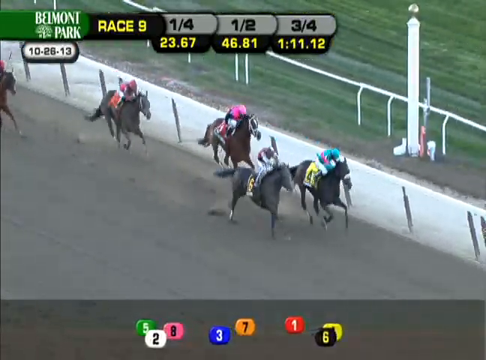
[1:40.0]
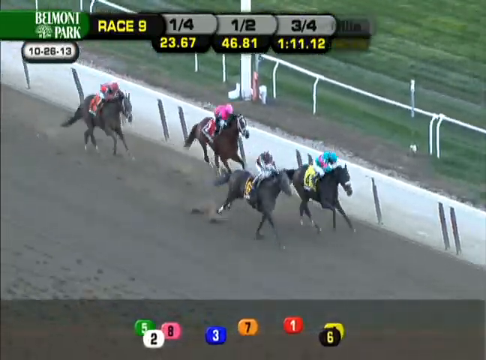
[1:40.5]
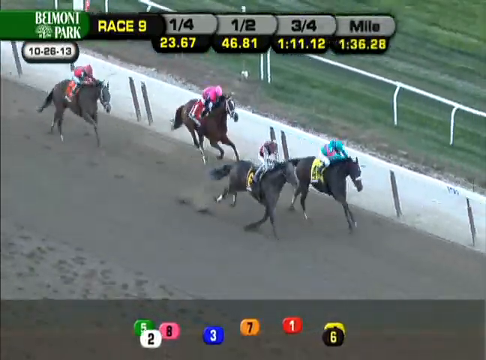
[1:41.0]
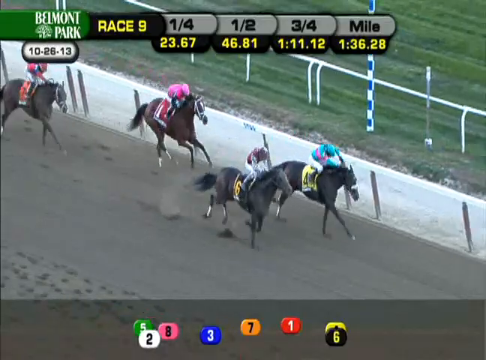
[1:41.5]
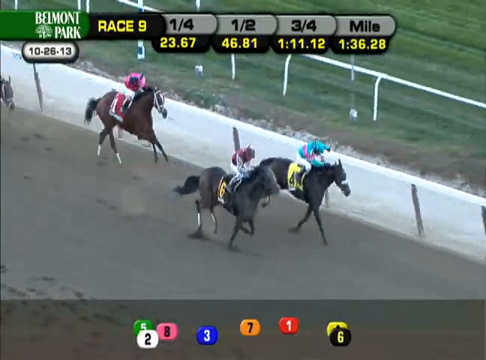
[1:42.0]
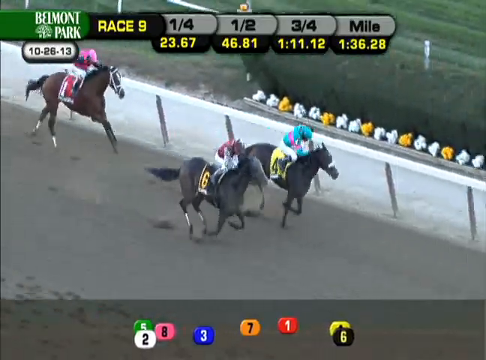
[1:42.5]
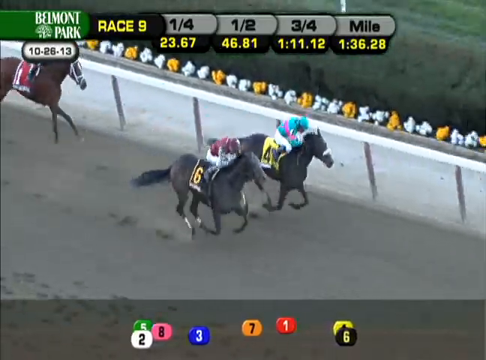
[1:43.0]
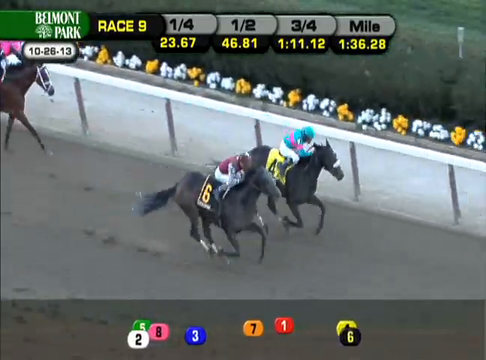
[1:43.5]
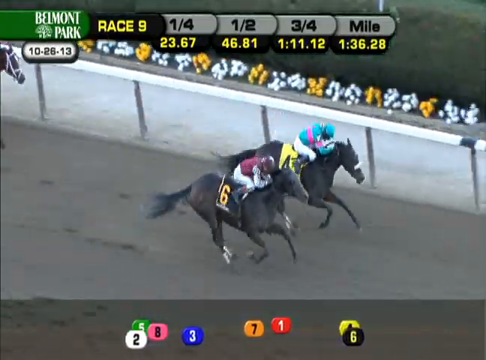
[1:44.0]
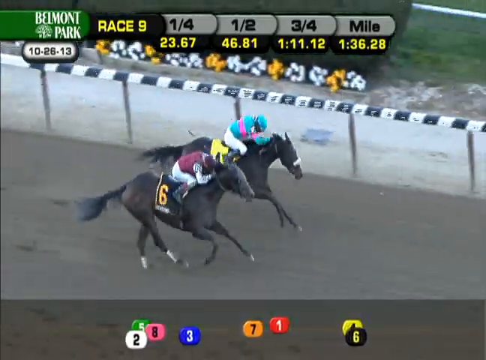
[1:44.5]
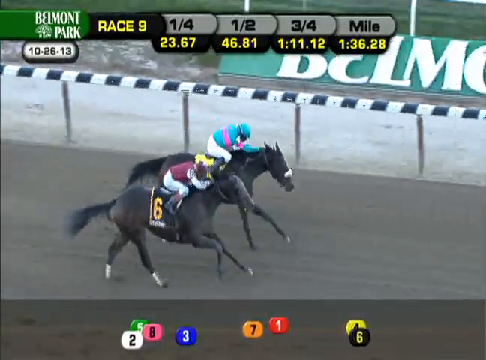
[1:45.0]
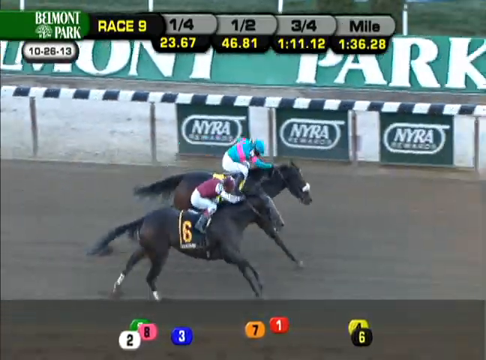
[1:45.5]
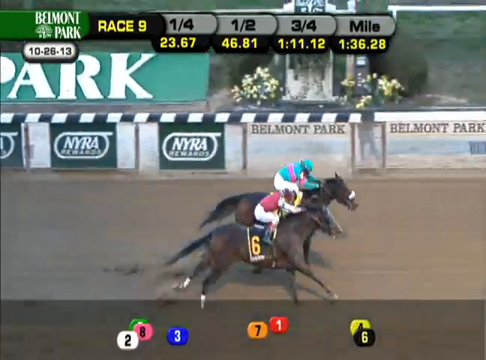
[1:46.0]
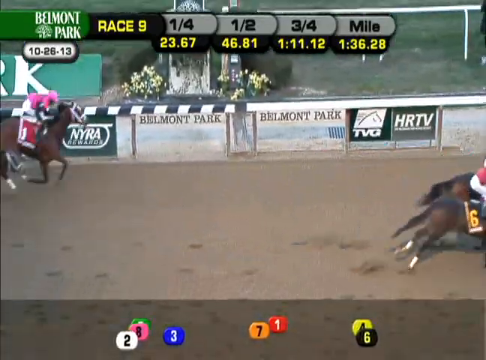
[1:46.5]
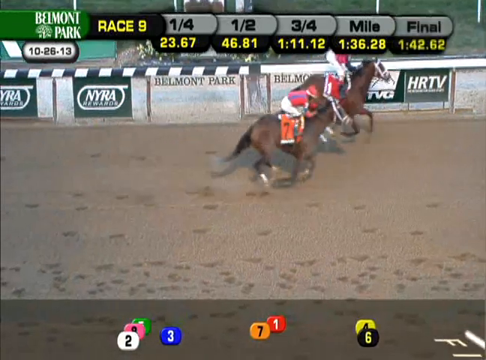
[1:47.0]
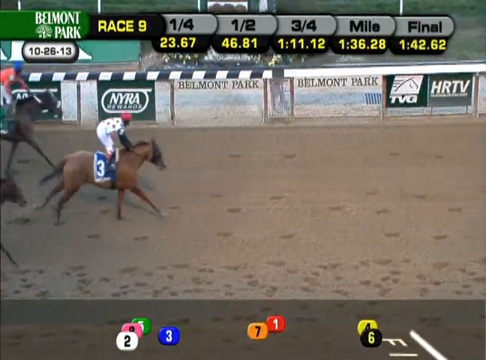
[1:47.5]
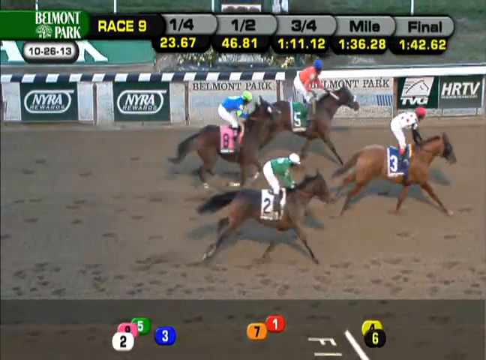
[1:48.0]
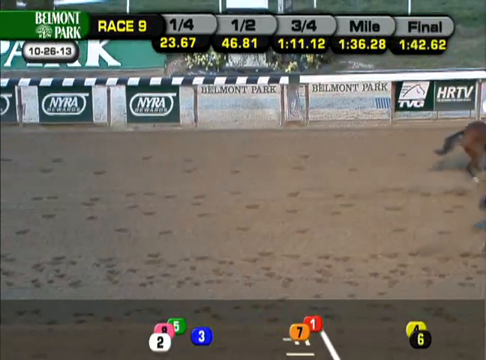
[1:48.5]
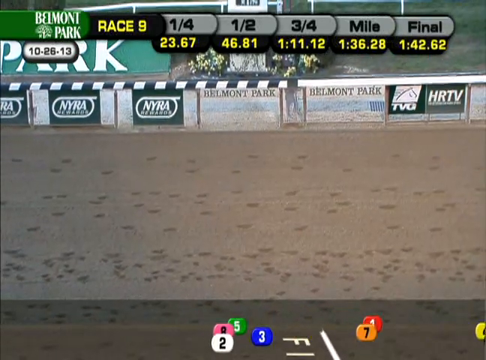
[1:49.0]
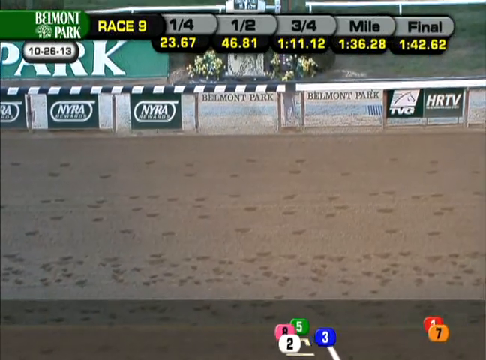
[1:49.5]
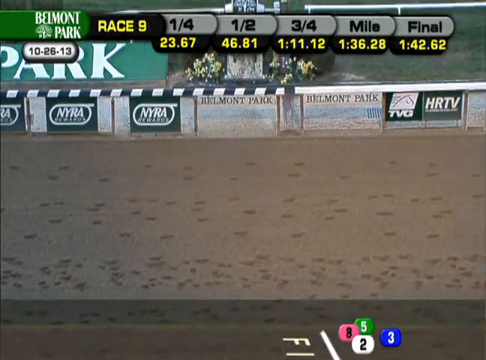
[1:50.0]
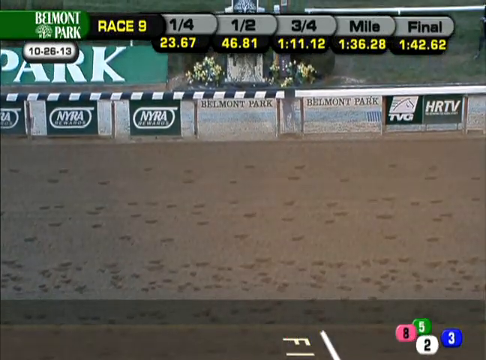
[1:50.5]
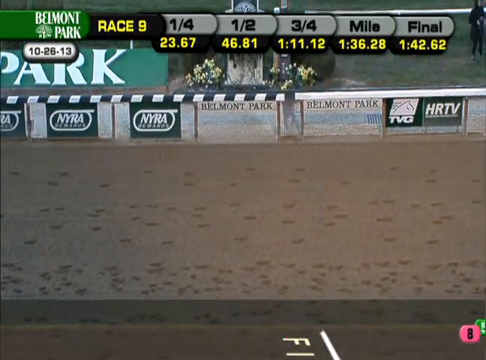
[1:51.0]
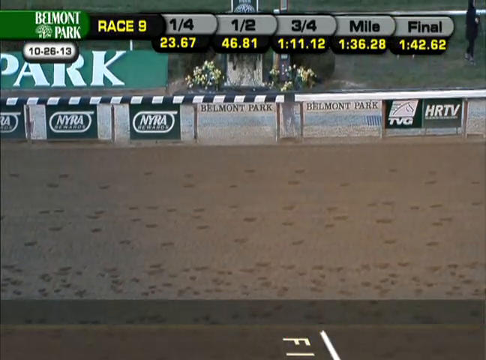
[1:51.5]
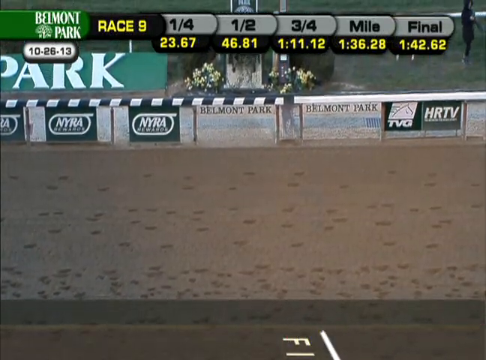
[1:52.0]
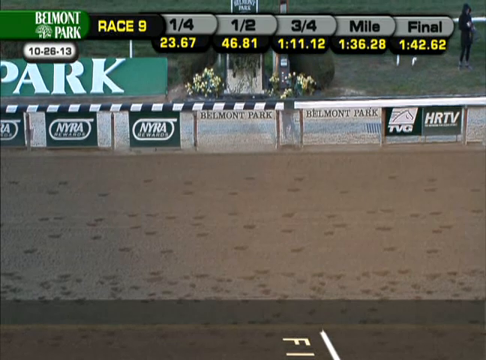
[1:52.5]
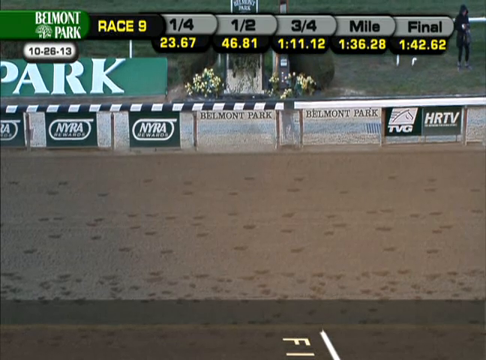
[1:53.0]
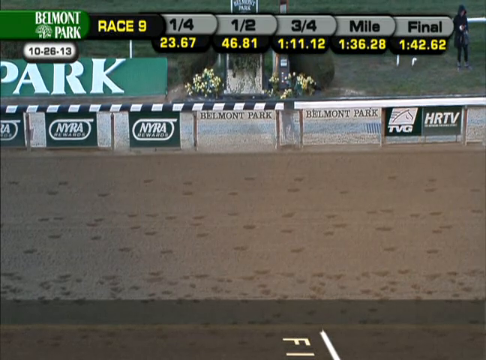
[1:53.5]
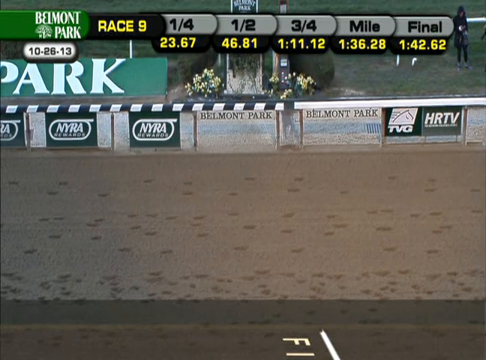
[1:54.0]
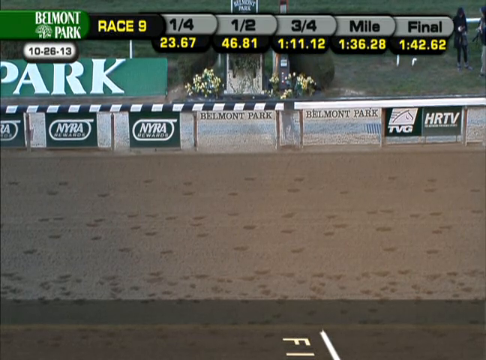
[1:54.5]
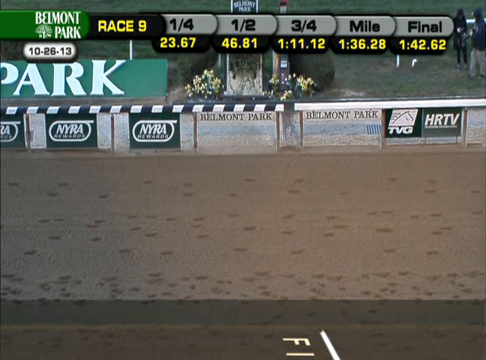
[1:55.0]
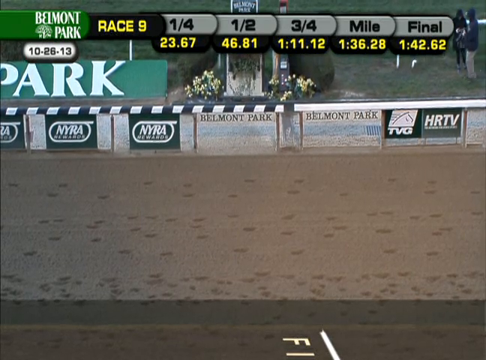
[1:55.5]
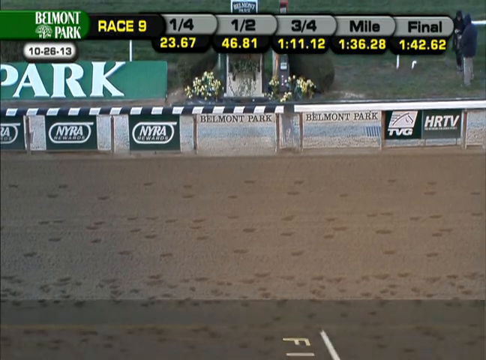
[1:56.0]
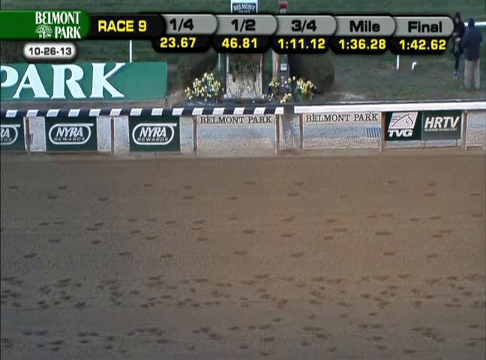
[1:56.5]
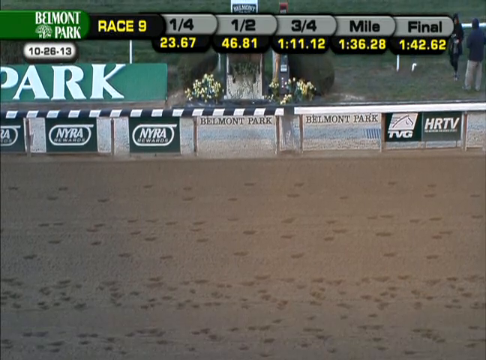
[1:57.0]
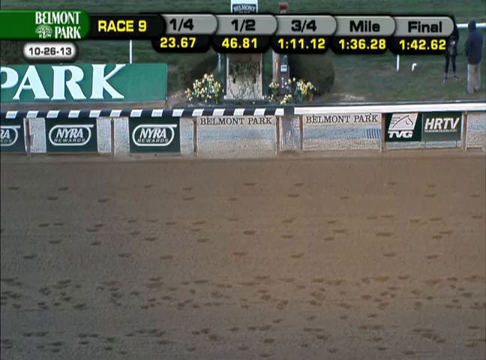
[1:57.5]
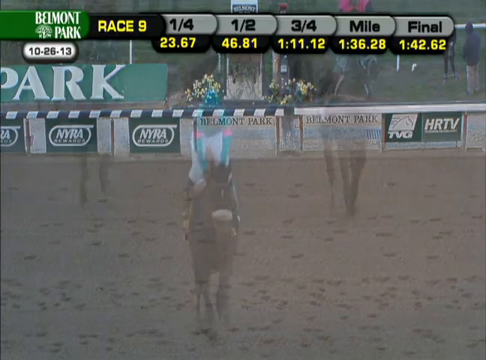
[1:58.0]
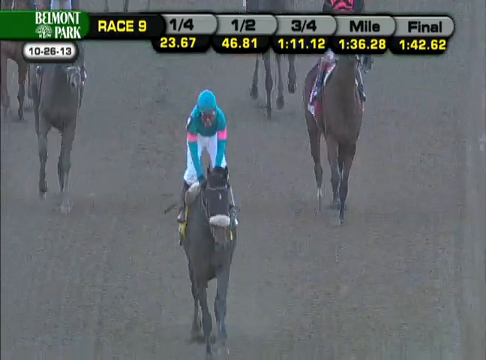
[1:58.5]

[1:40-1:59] A horse race is underway at Belmont Park. At the top left of the screen are several text indicators: the Belmont Park logo, an indicator that this is race 9, odds indicators reading "one-fourth, 23.67", "one-half, 46.81", and "three-fourths, 111.12", and a date indicator reading October 26, 2013. At the bottom of the screen are eight numbered icons representing the horses' numbers and relative positions. Stanwyck is ahead of the pack, and as the horses race, another text indicator appears at the top reading "mile, 136.28". Stanwyck reaches the finish line in first place. A shot of the stands follows, with several people standing in the background watching the race, and then the video cuts to another angle of the horses after the race has ended.